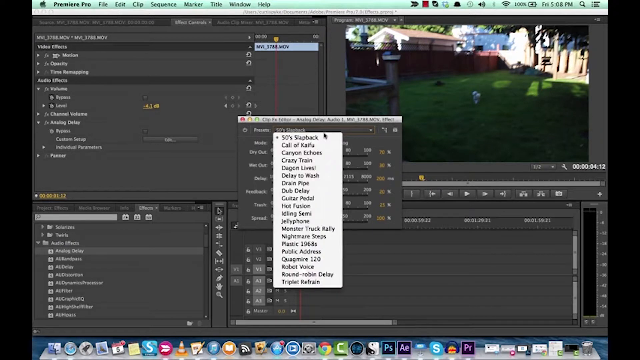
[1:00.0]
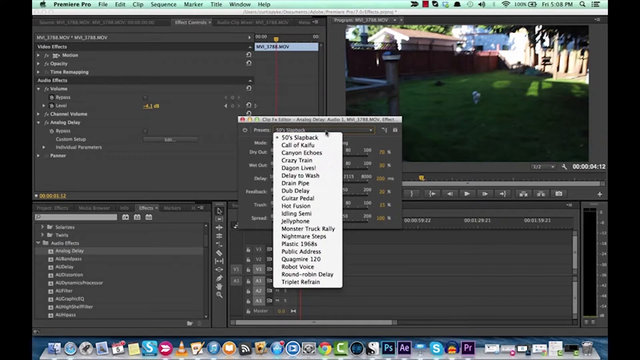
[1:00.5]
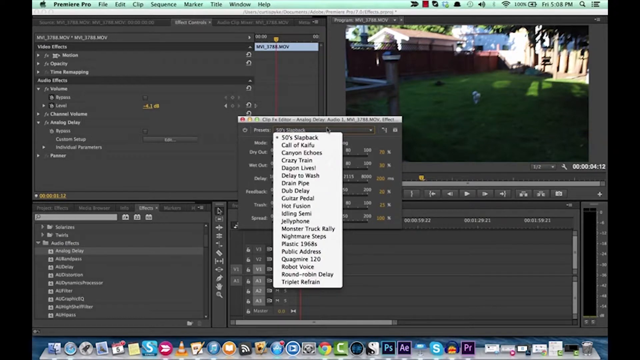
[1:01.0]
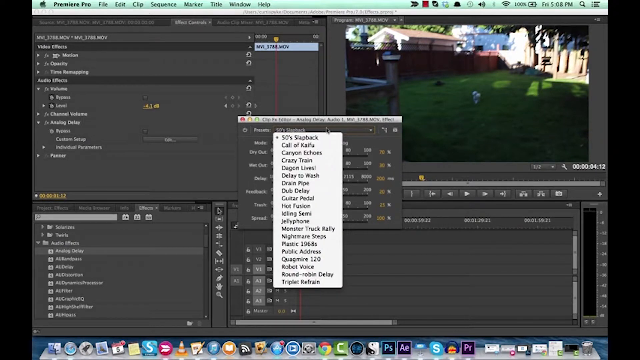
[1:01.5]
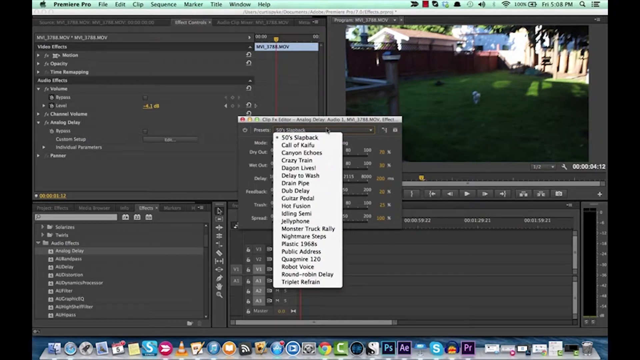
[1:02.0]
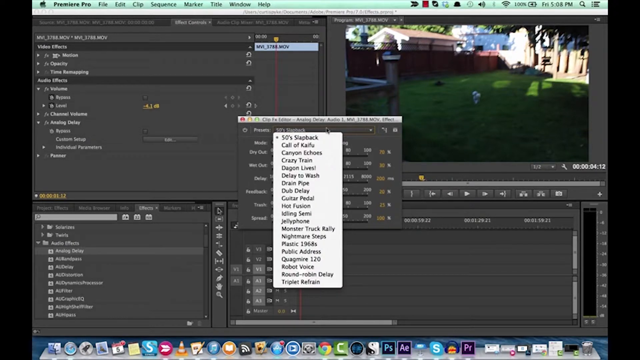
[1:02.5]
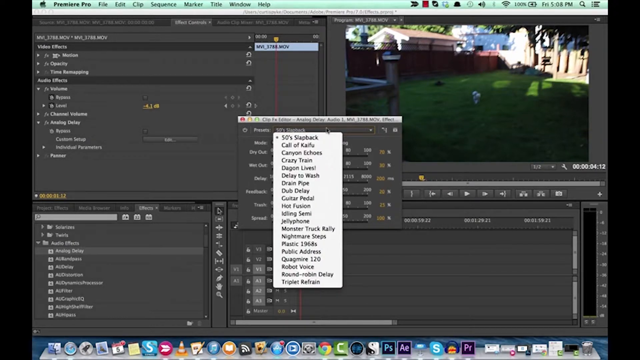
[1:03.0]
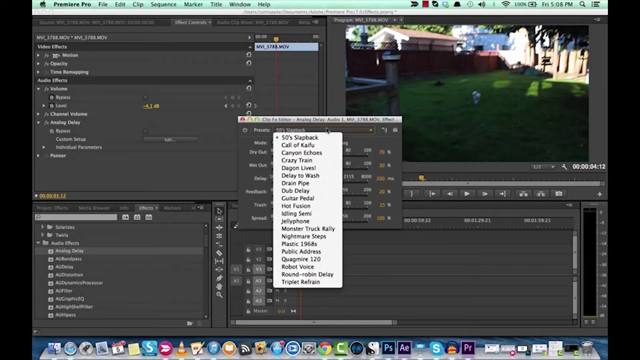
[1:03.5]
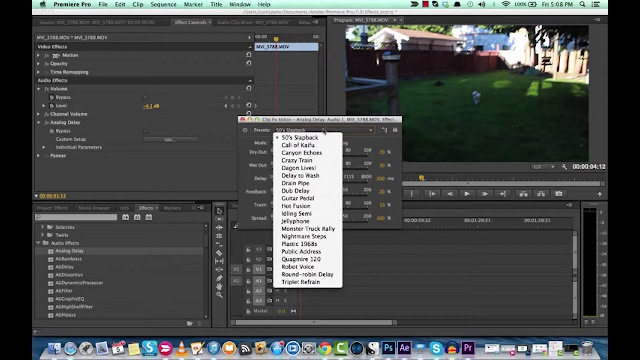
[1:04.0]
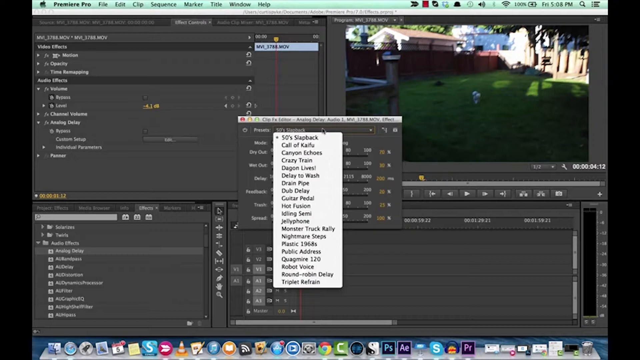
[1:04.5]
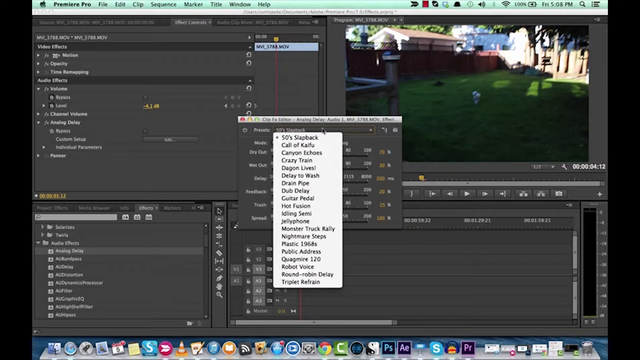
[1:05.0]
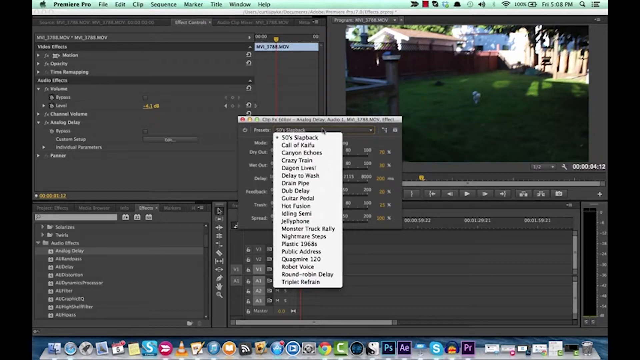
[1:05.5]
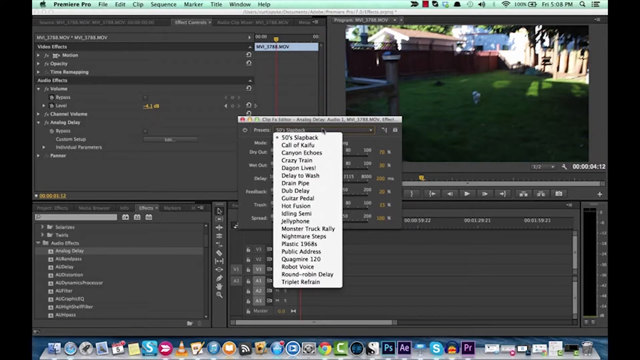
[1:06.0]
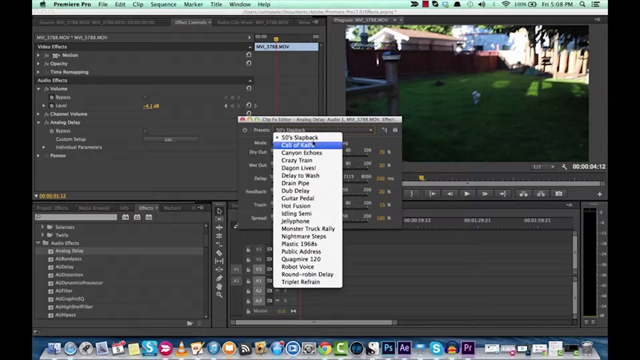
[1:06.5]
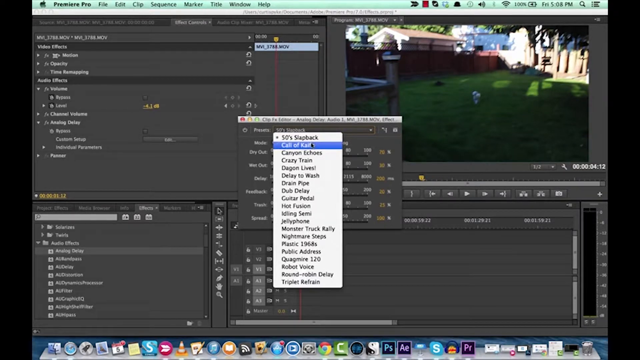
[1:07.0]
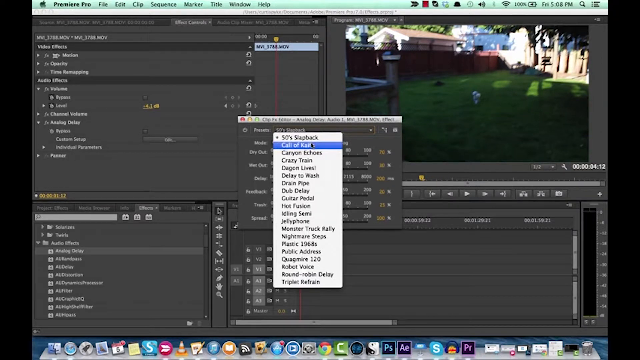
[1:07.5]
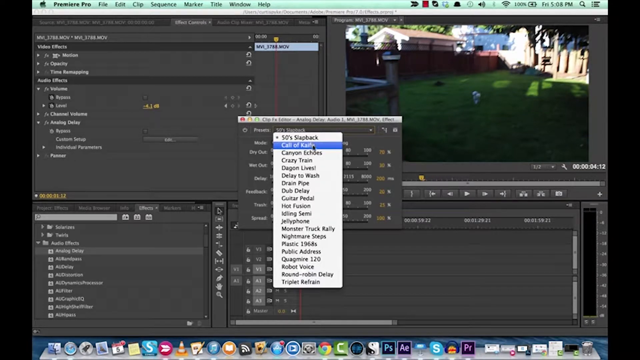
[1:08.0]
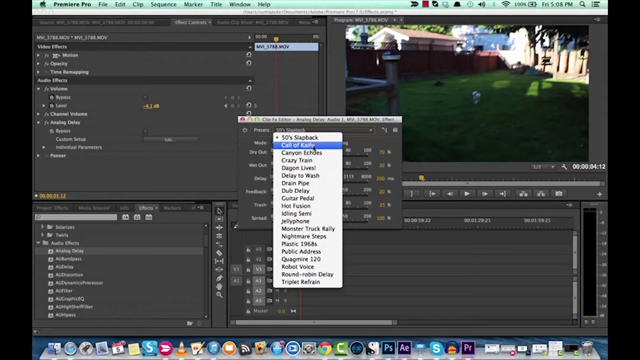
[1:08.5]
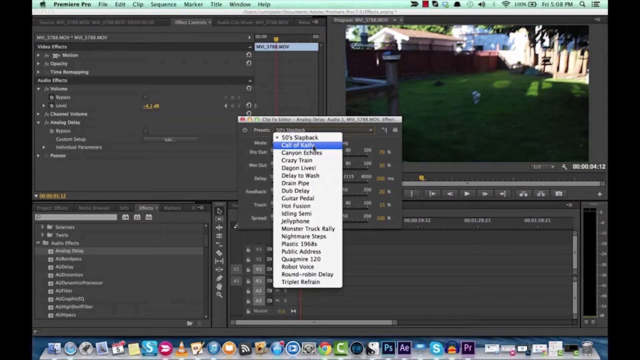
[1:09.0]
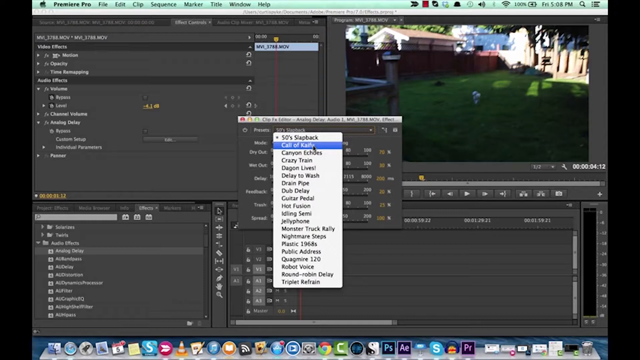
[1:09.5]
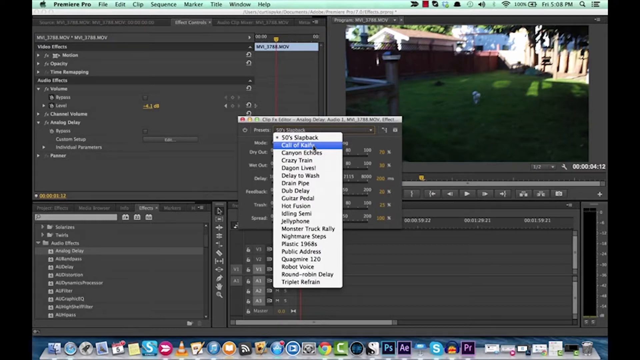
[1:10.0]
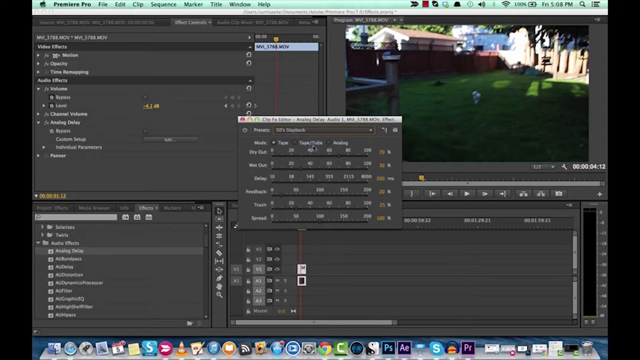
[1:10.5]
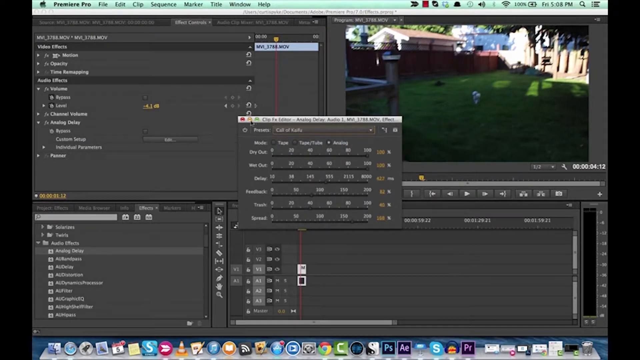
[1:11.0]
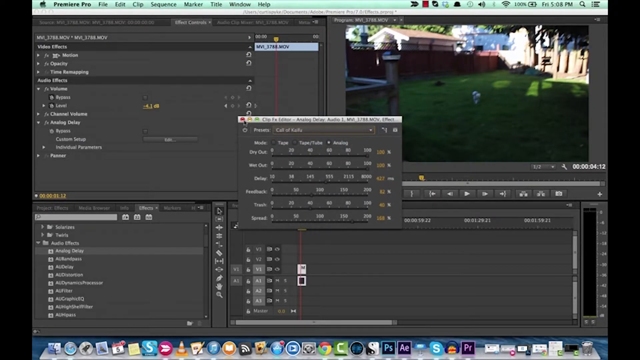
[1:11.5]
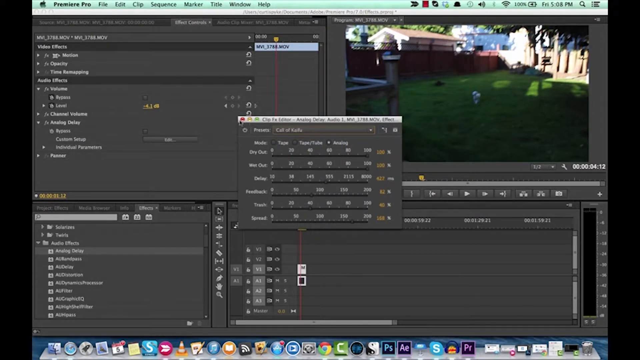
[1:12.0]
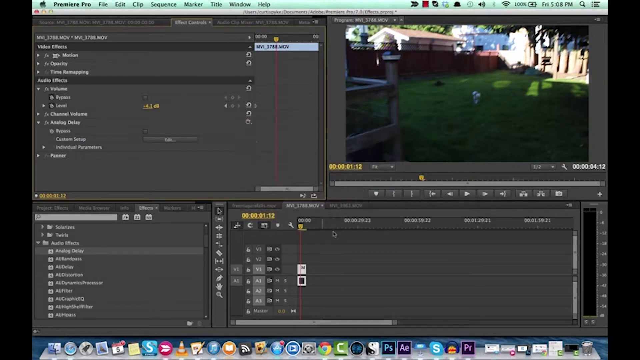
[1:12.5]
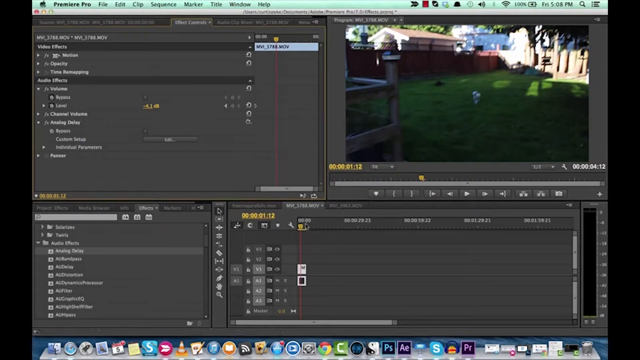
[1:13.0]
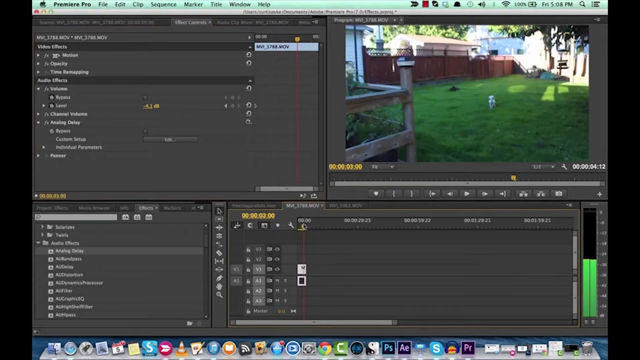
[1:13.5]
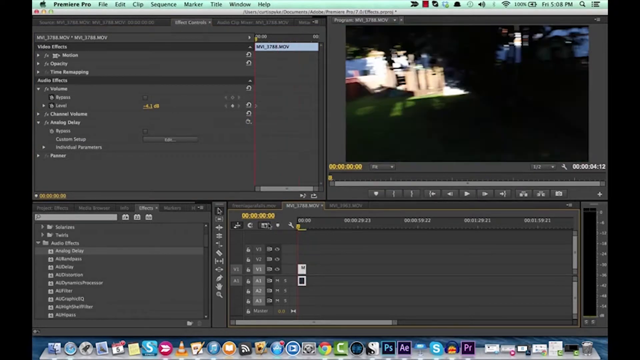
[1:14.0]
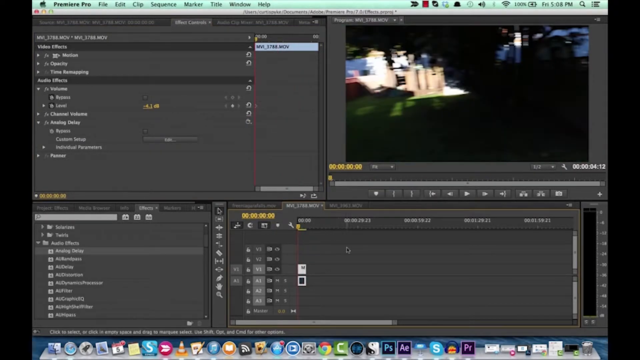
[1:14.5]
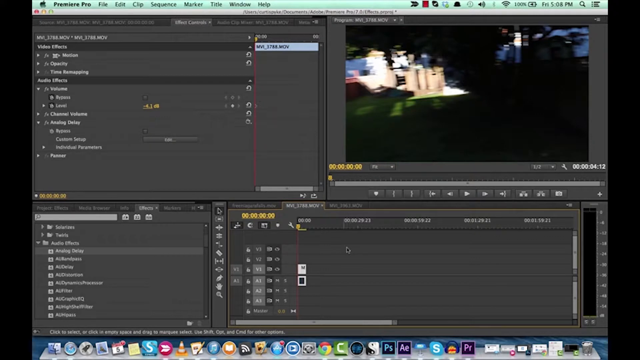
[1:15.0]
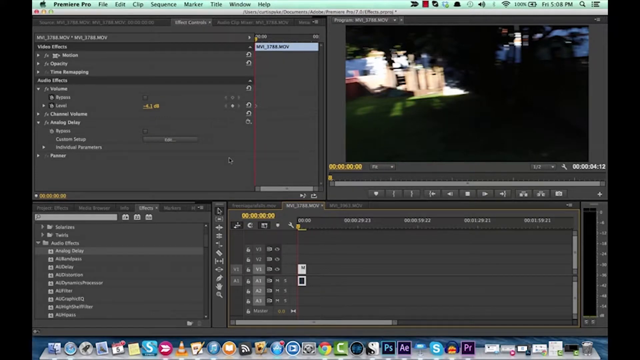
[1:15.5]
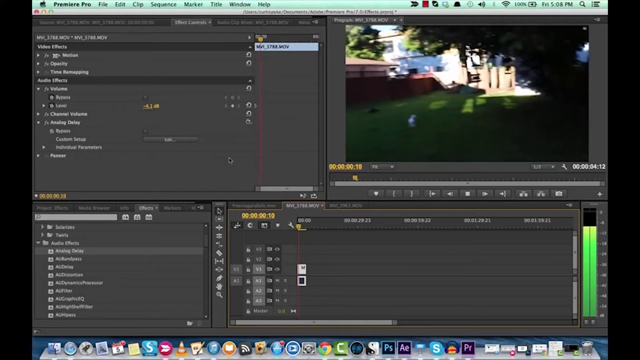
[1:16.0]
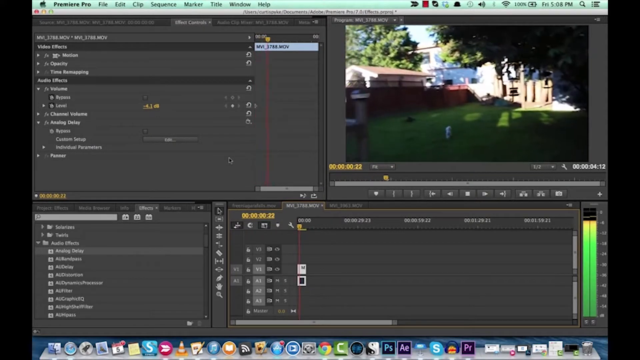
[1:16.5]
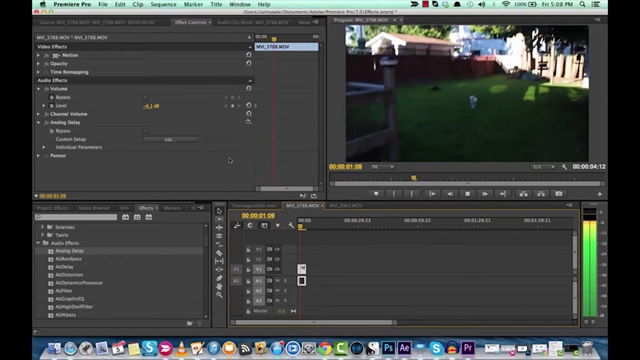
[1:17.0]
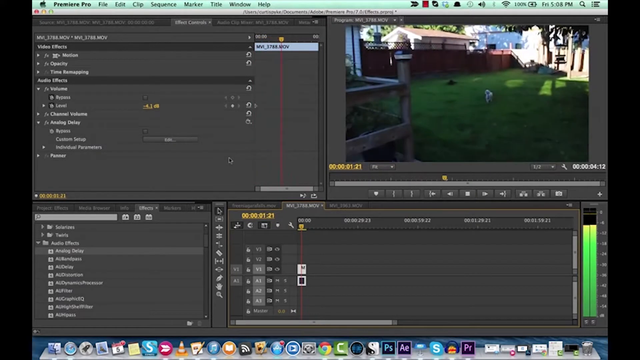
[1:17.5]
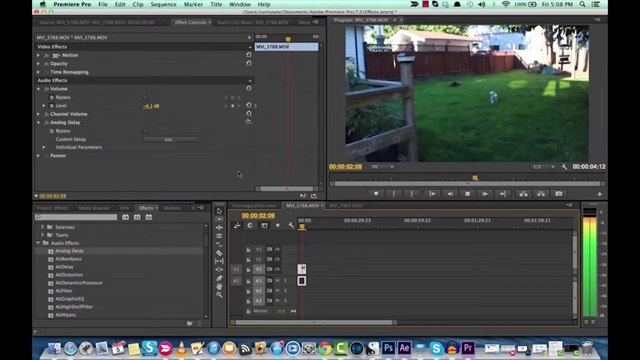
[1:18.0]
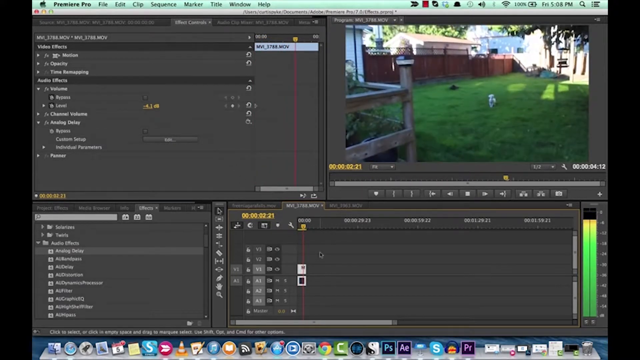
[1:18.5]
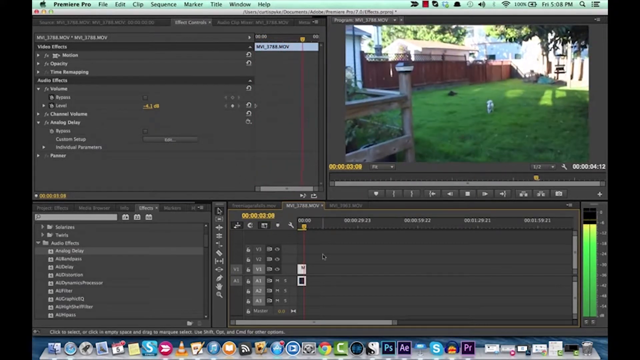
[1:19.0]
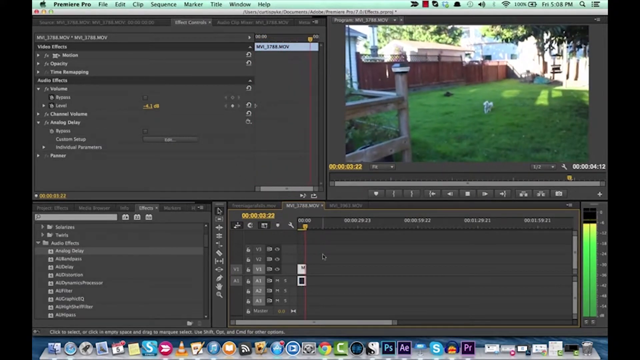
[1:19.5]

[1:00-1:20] The user appears to be looking at a drop-down menu of more effects in the presets of the Analog Delay effect they were adjusting, starting at the fifties slap back preset. They hover over another entry and start playing the video, apparently trying out effects by trial and error, though this is not entirely clear. When the new preset is selected, the image looks darker: the bright outdoor scenery shot becomes a darker-looking shot with much more saturation.